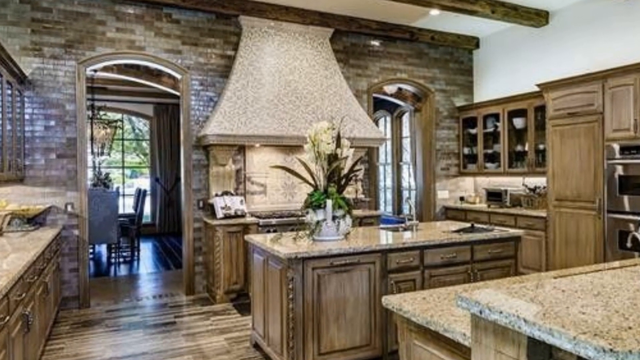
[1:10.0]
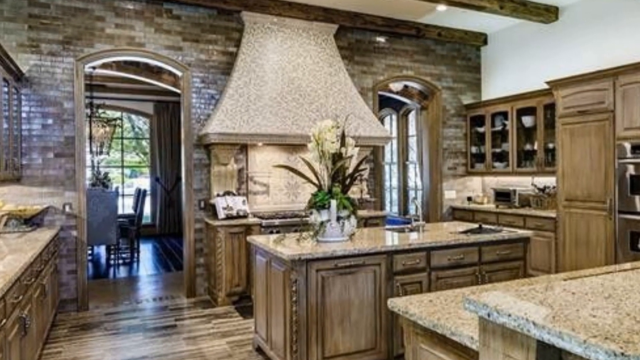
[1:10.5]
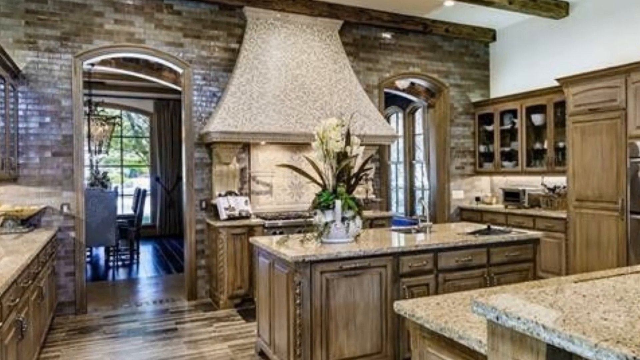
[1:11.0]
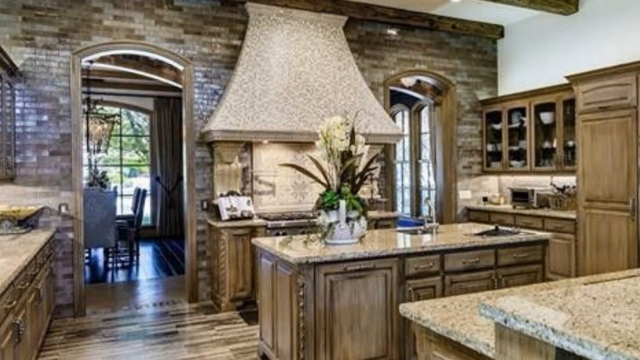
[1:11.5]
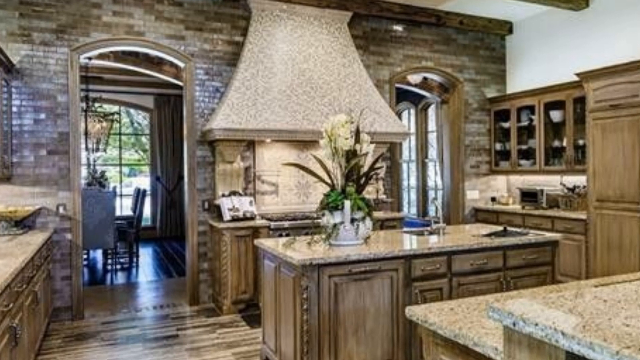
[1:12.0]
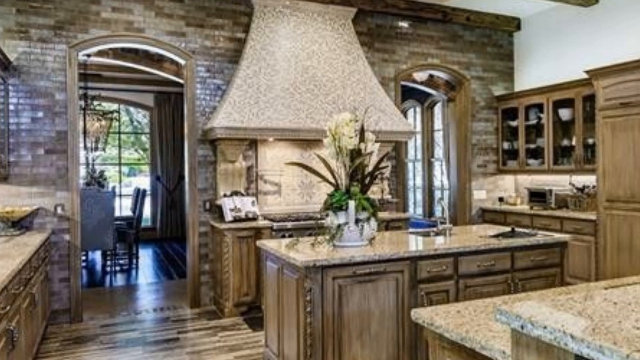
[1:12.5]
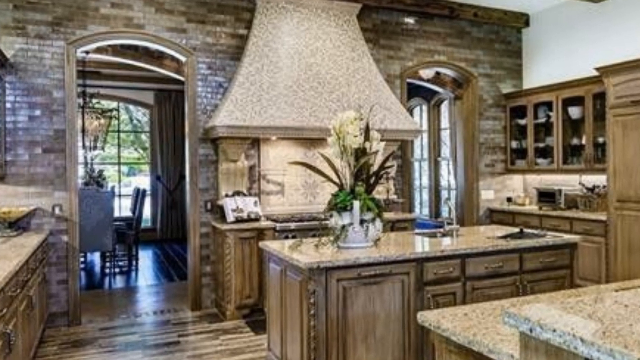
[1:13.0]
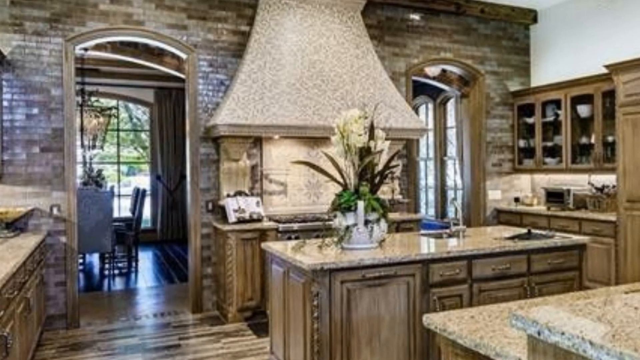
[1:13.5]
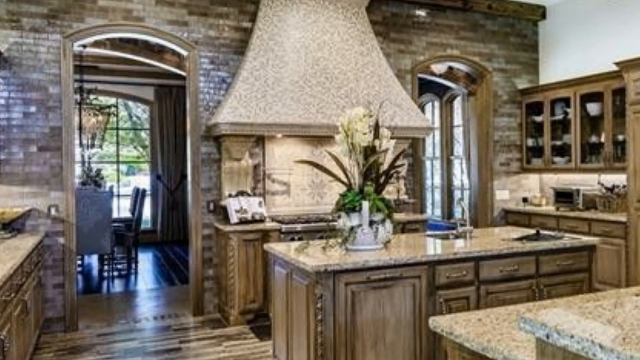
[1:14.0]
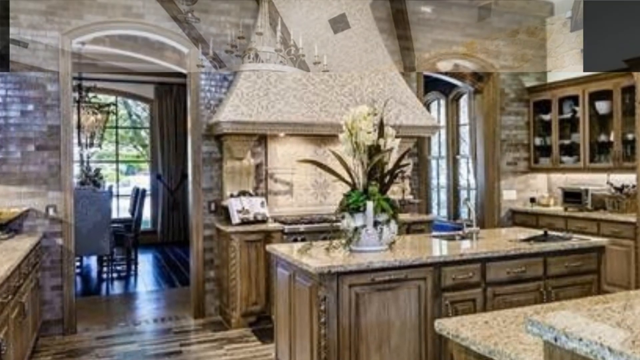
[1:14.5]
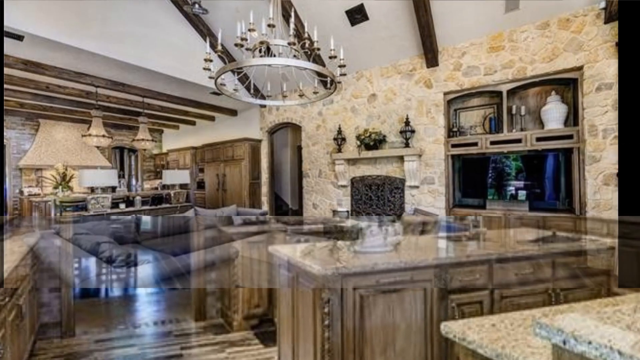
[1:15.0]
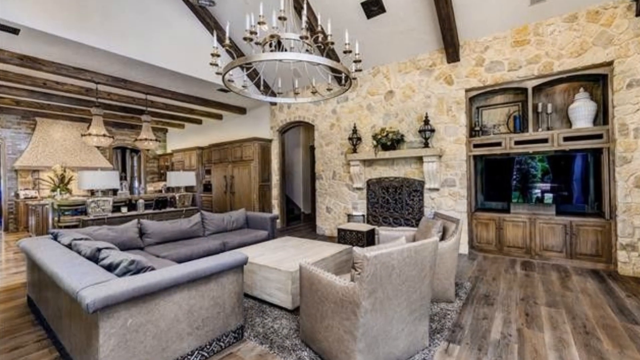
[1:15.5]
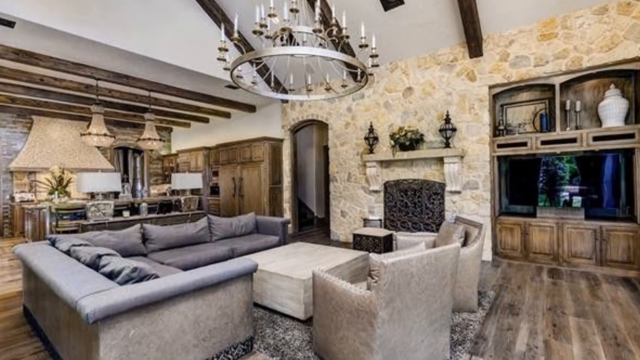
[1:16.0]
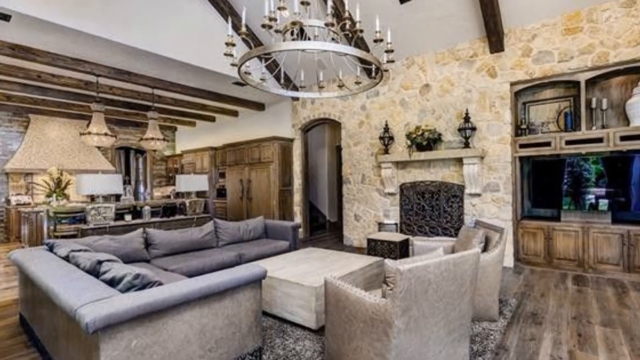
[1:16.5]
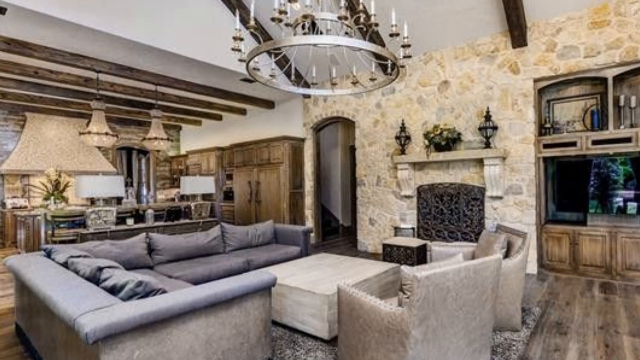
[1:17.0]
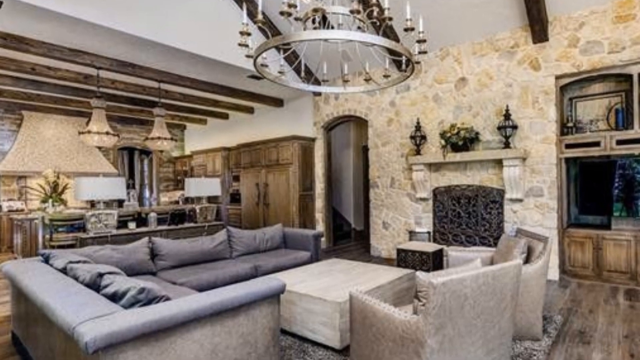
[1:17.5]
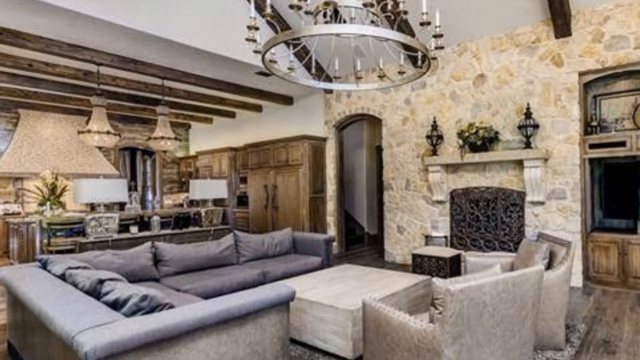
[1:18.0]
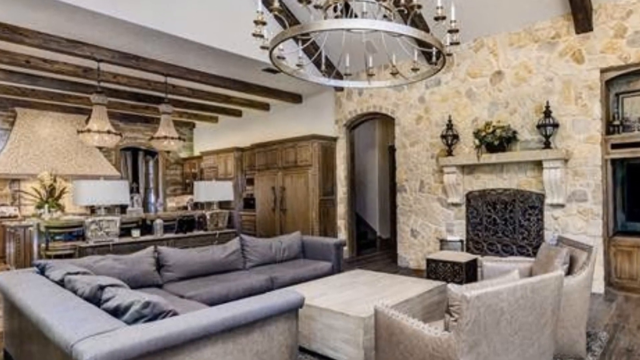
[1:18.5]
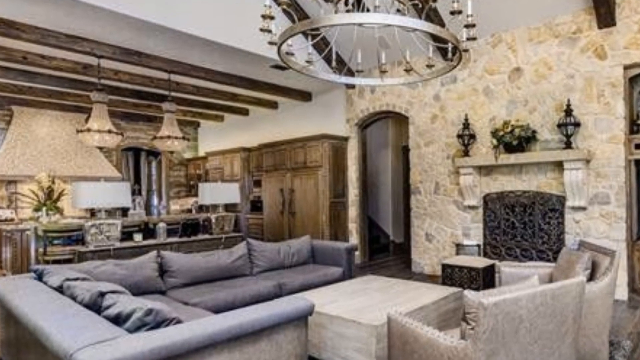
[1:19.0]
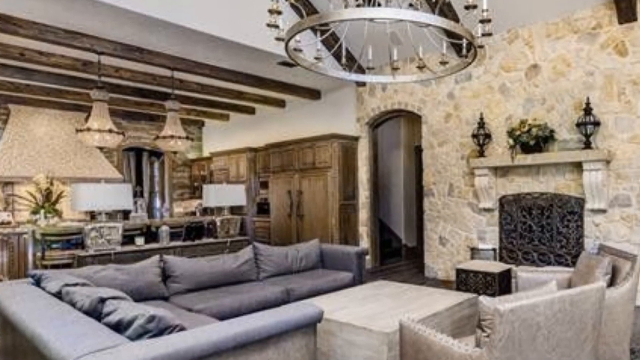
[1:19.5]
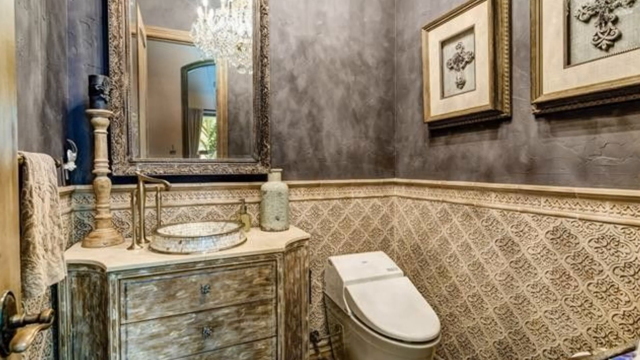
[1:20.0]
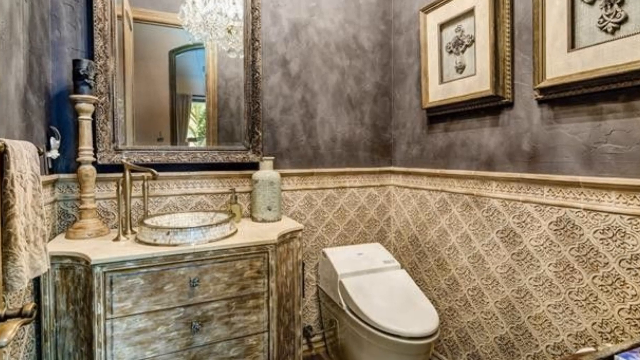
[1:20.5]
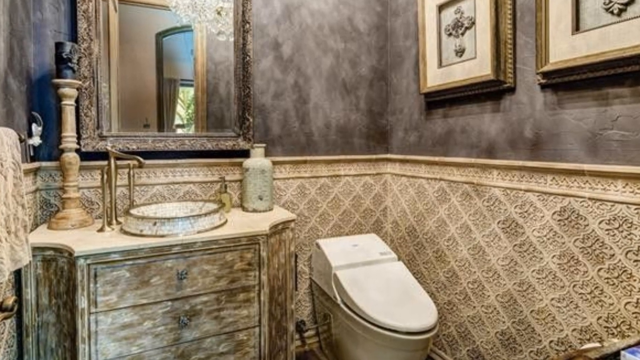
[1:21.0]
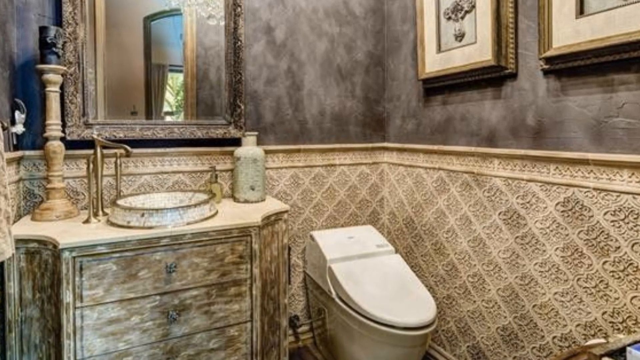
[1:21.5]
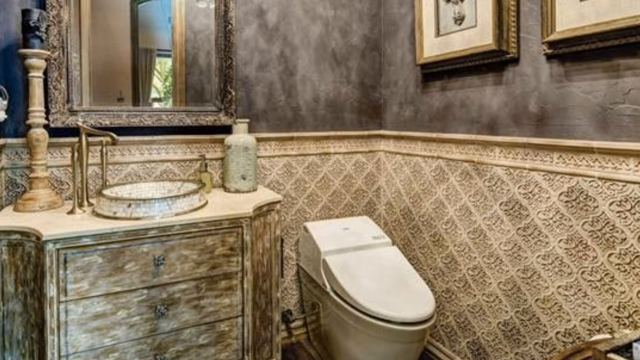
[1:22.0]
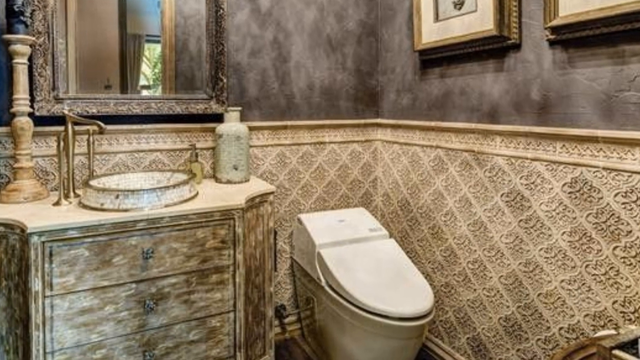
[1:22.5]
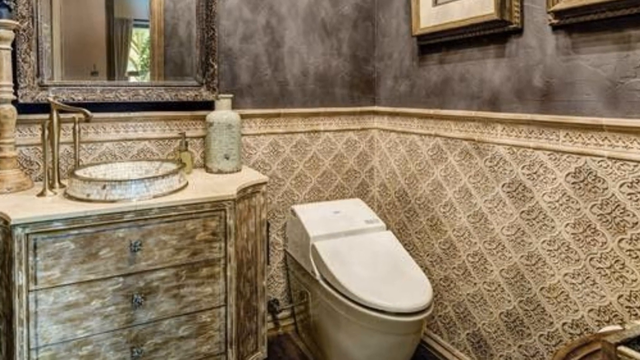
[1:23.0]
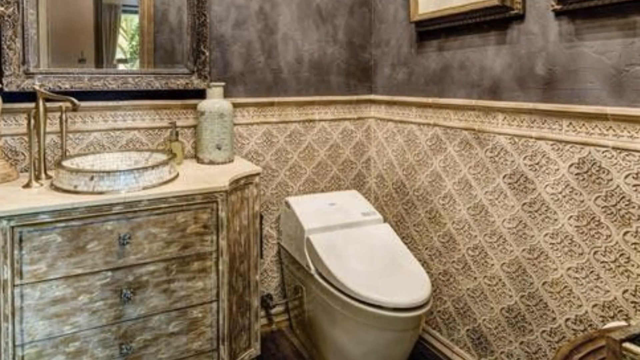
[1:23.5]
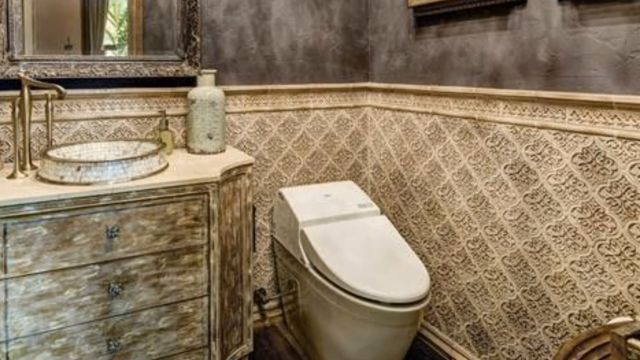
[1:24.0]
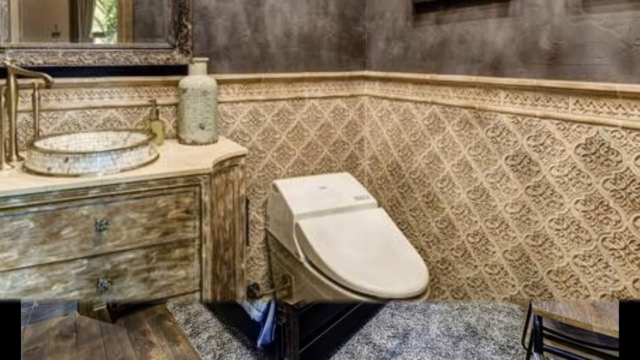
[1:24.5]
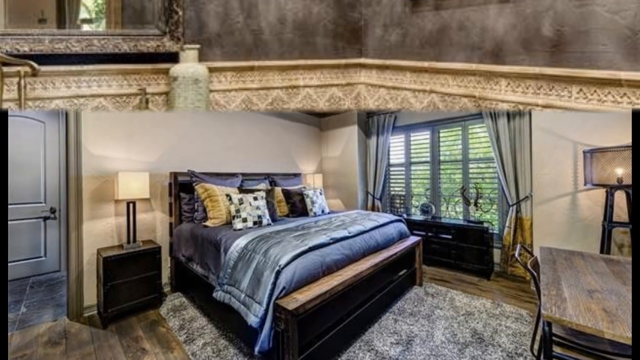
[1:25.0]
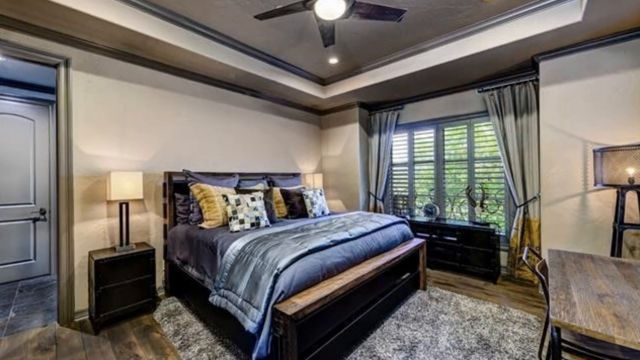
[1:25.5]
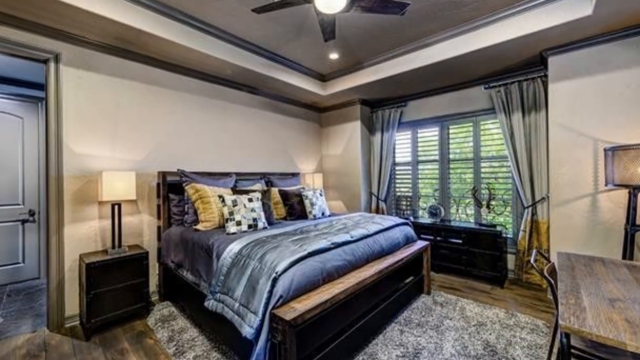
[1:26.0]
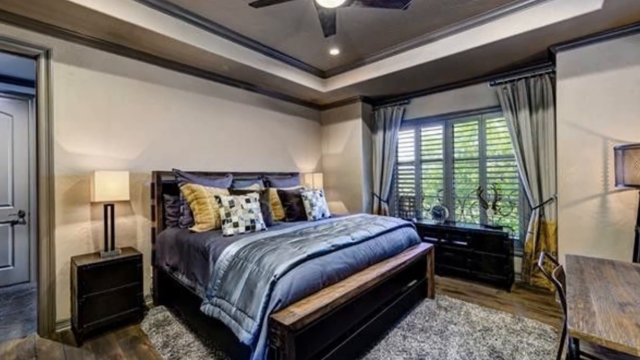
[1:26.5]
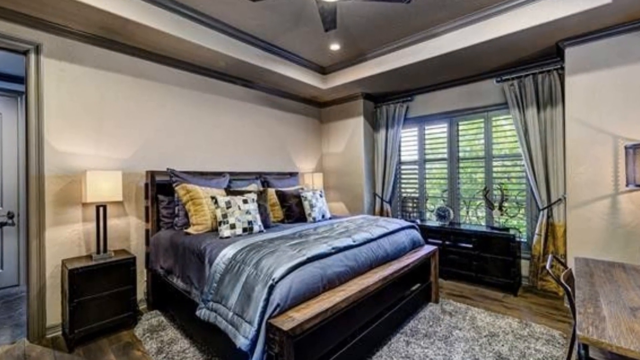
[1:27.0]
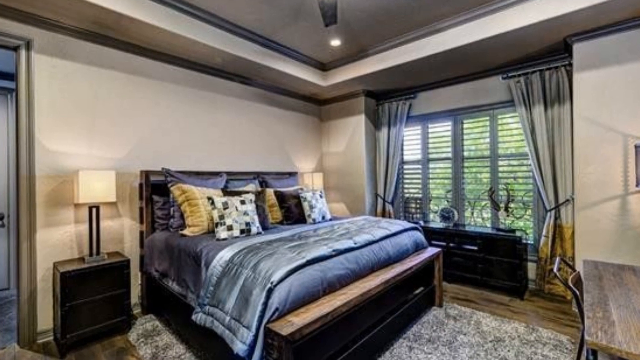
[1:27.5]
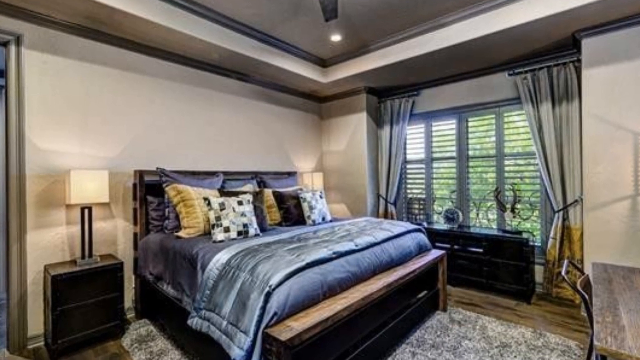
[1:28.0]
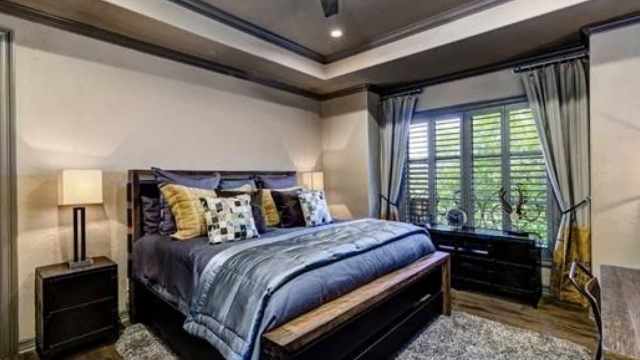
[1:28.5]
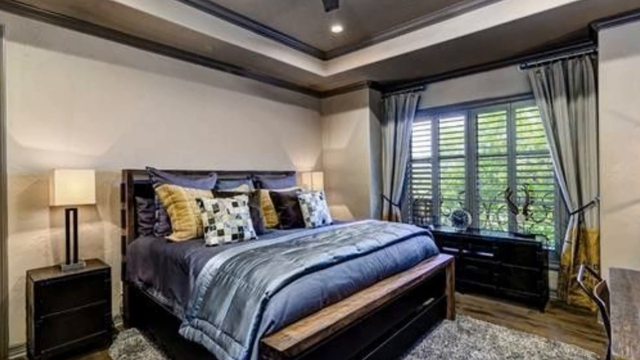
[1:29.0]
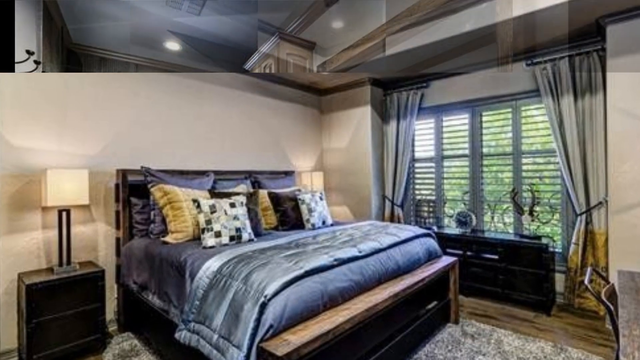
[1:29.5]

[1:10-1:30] The kitchen is shown with a lot of light coming in from the garden through the windows. The view then shows what is behind the kitchen: a living area, possibly a seating area near the kitchen rather than the main living room, as it looks somewhat small. There is no big TV on the wall. A chandelier is on the ceiling, and there is a large seating area with a large corner sofa. Next comes a bathroom or toilet area that does not seem very big, with just a toilet, a sink and a mirror, all very modern with premium-looking materials. The view then moves to another bedroom that looks like a guest or second bedroom, apparently smaller than the earlier bedroom, with the cream, beige, black and white theme and a lot of light coming in from the window.